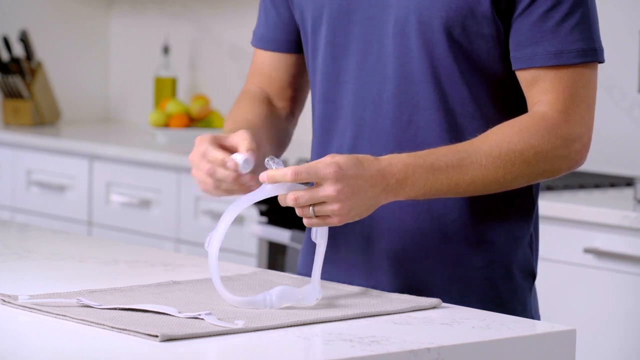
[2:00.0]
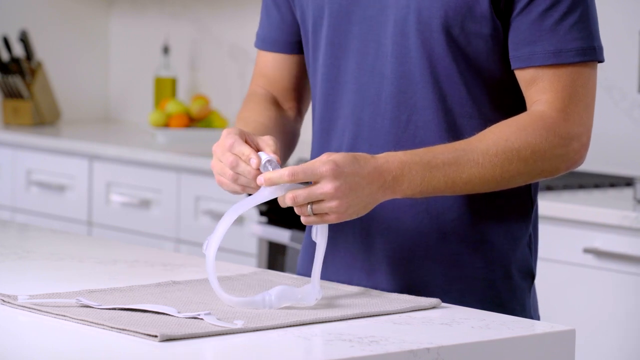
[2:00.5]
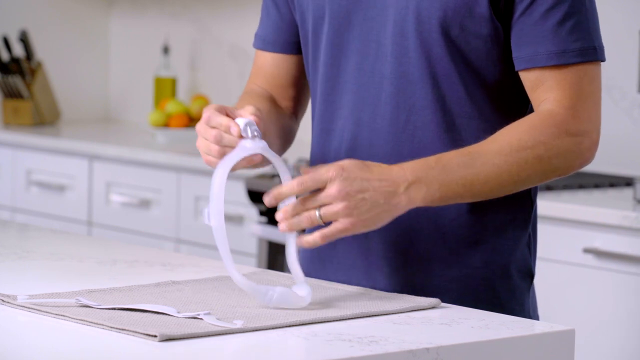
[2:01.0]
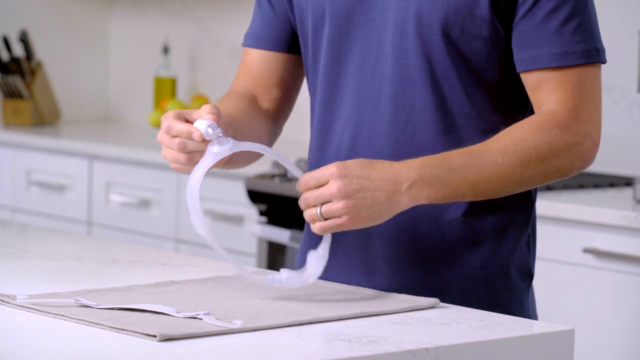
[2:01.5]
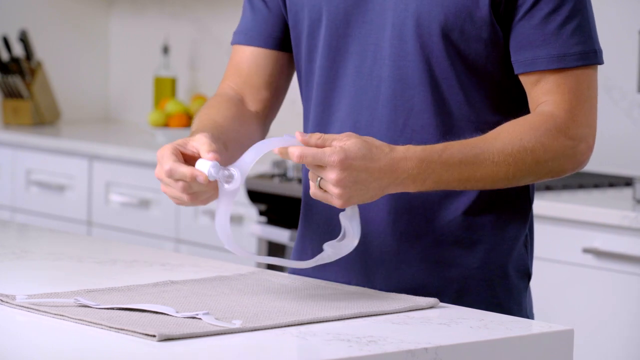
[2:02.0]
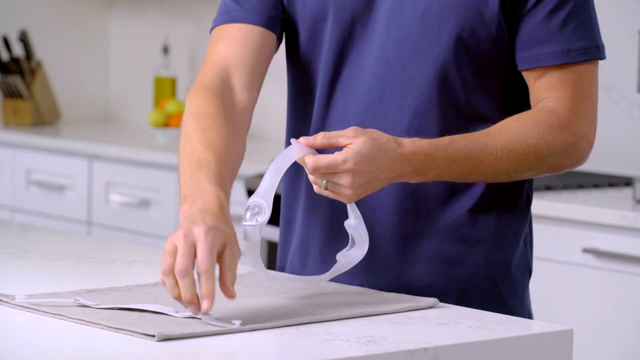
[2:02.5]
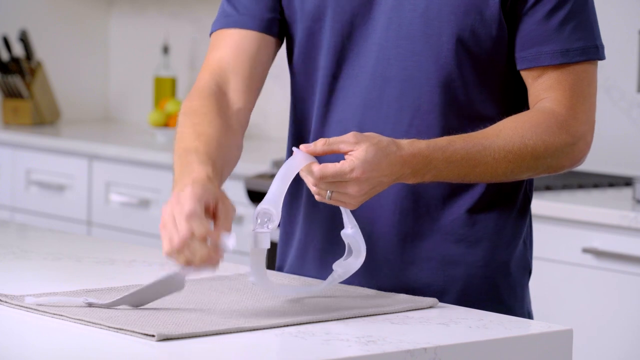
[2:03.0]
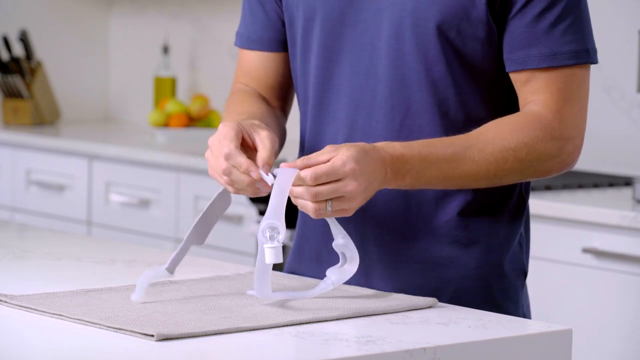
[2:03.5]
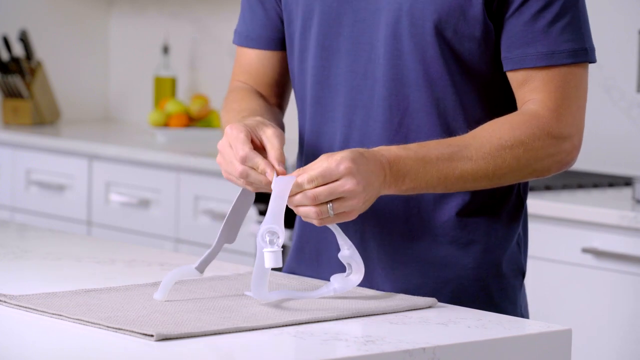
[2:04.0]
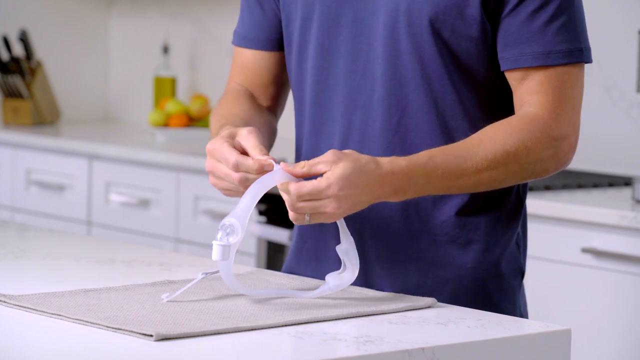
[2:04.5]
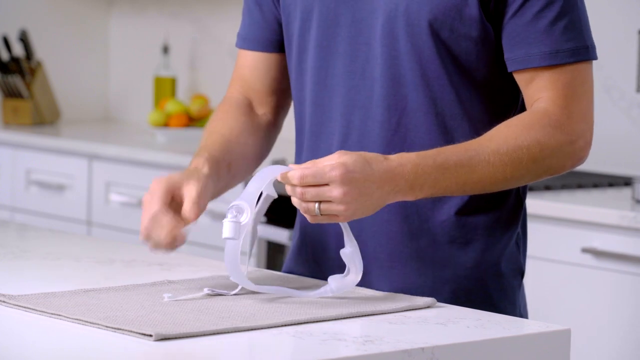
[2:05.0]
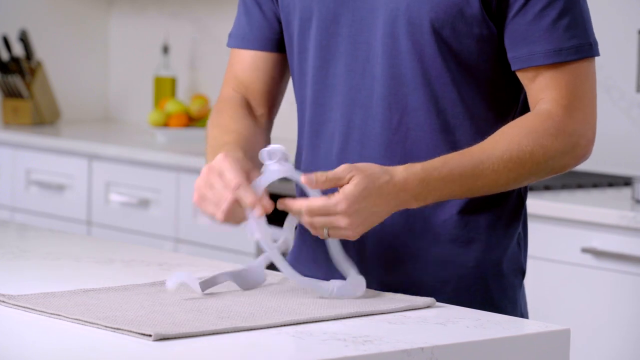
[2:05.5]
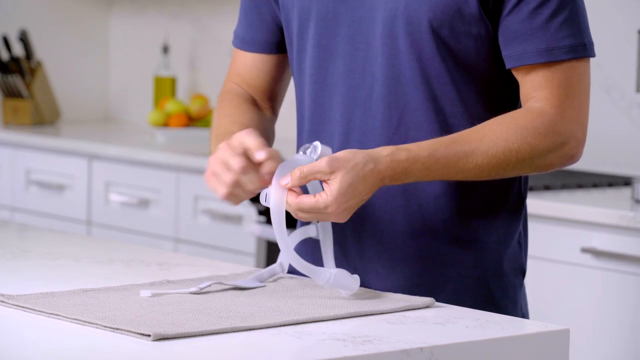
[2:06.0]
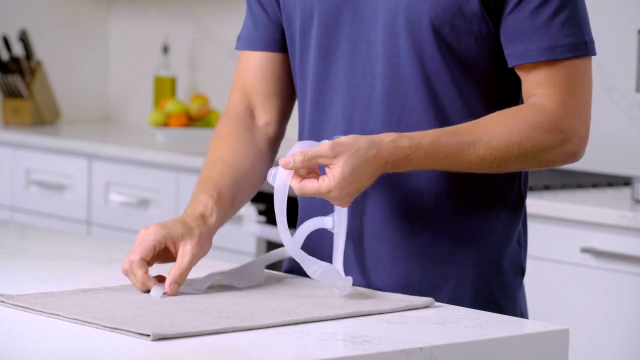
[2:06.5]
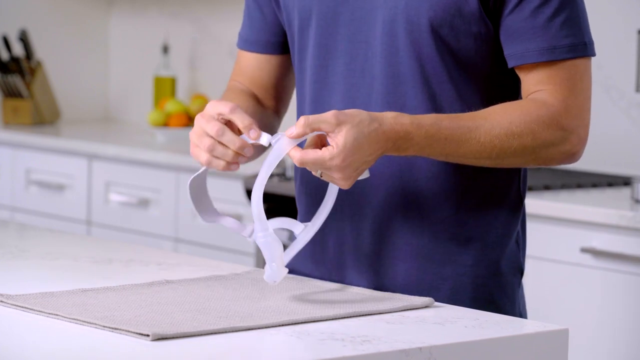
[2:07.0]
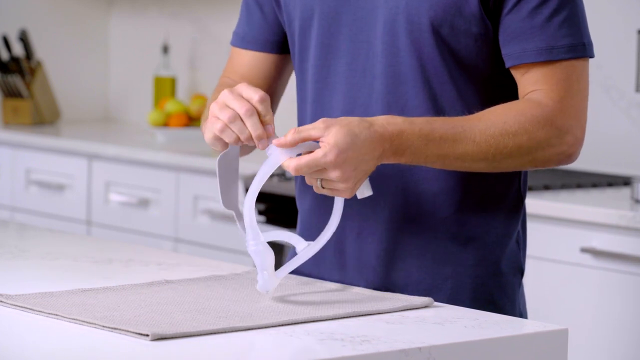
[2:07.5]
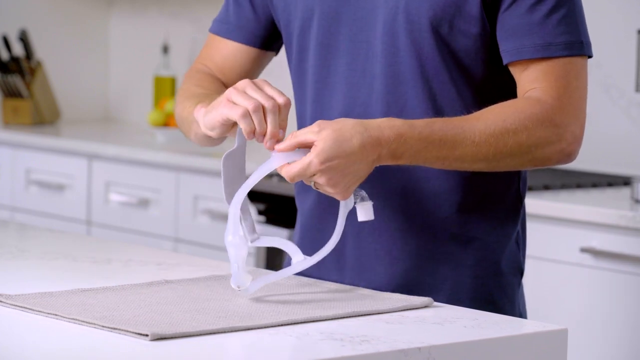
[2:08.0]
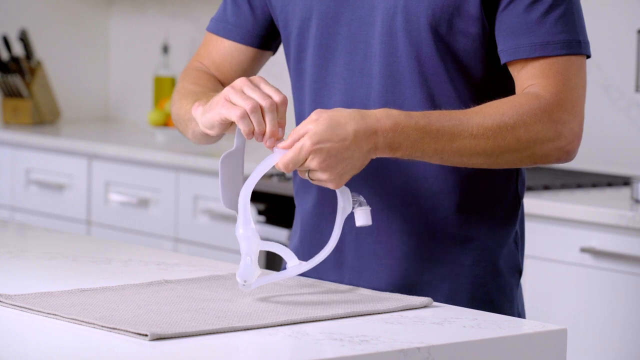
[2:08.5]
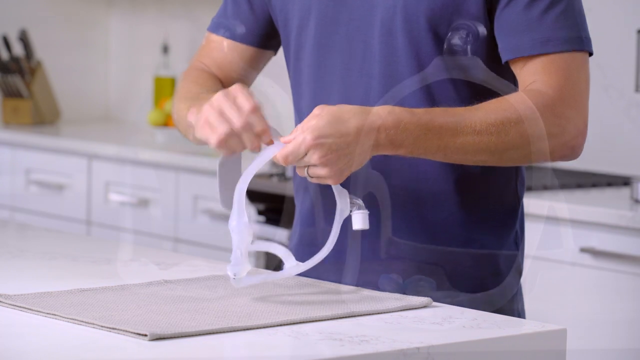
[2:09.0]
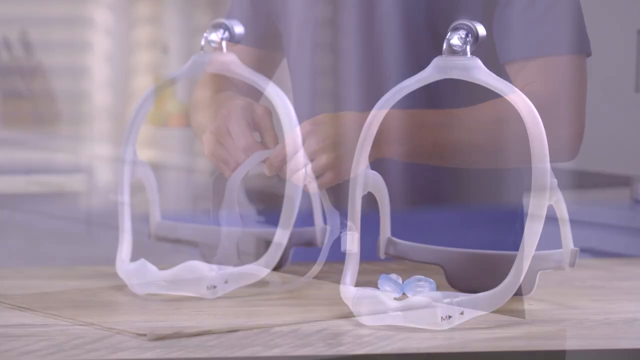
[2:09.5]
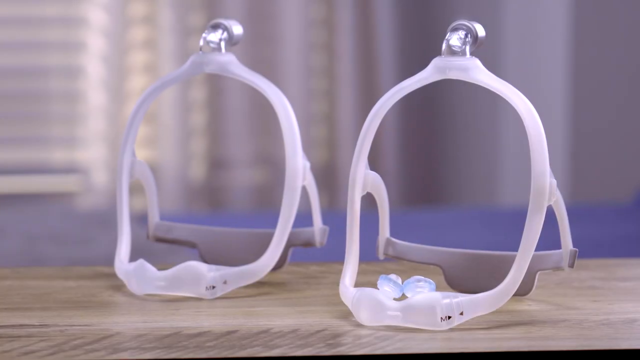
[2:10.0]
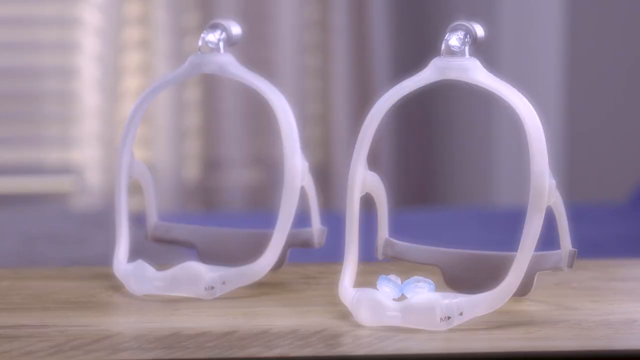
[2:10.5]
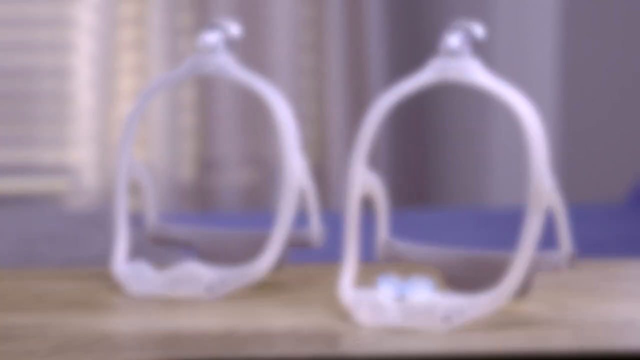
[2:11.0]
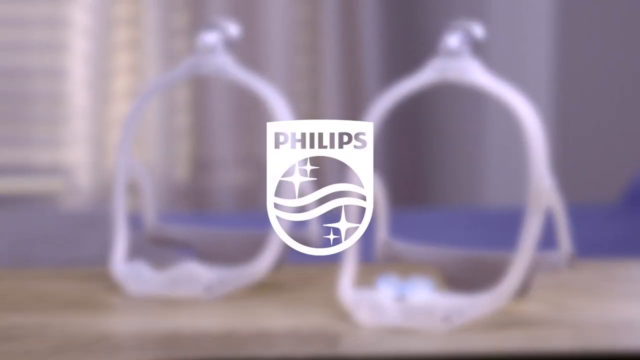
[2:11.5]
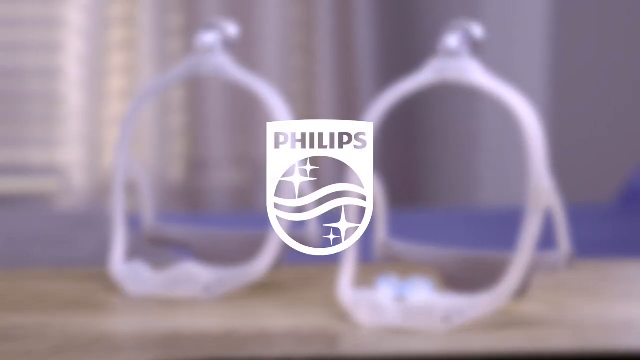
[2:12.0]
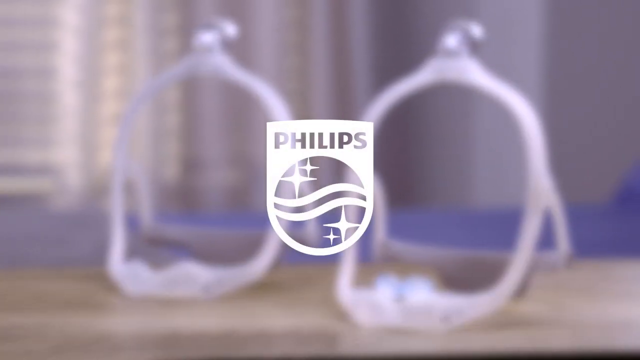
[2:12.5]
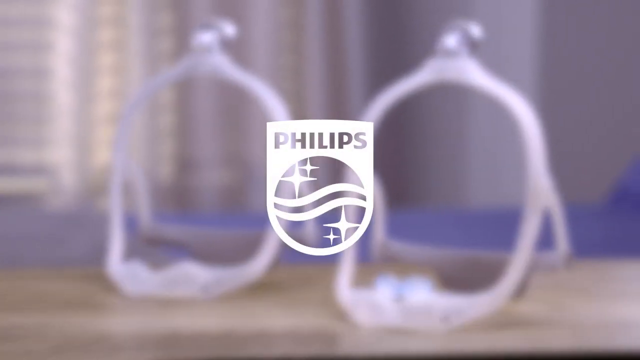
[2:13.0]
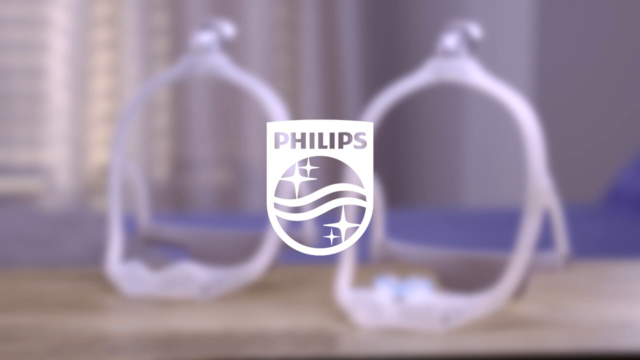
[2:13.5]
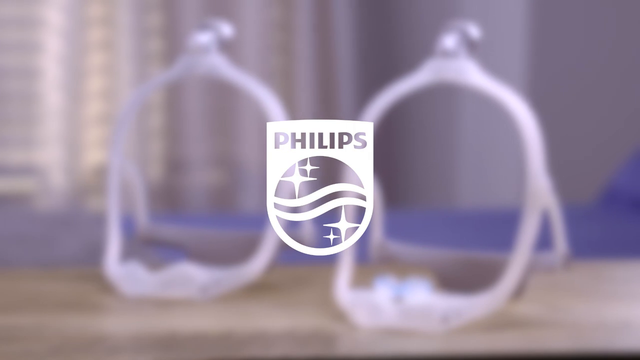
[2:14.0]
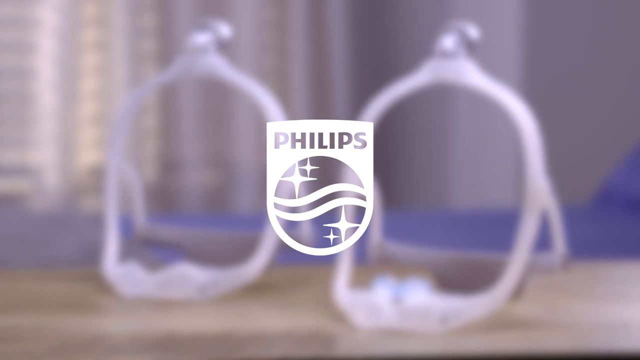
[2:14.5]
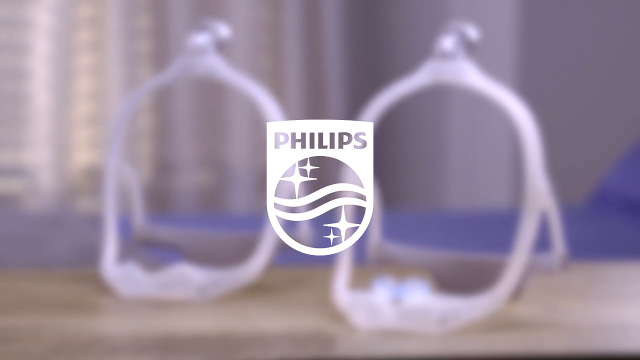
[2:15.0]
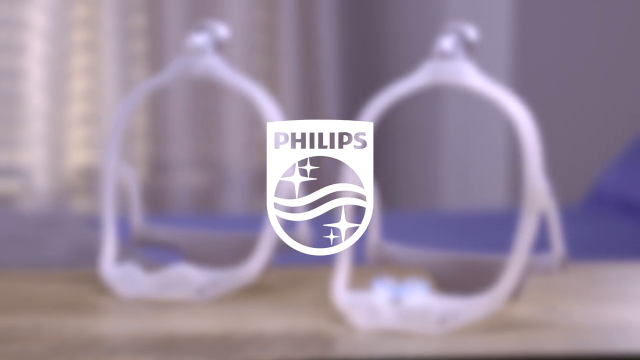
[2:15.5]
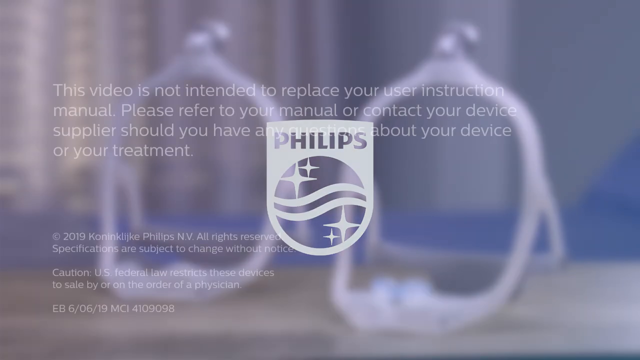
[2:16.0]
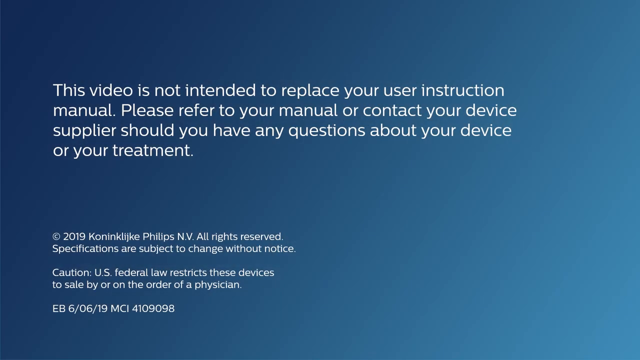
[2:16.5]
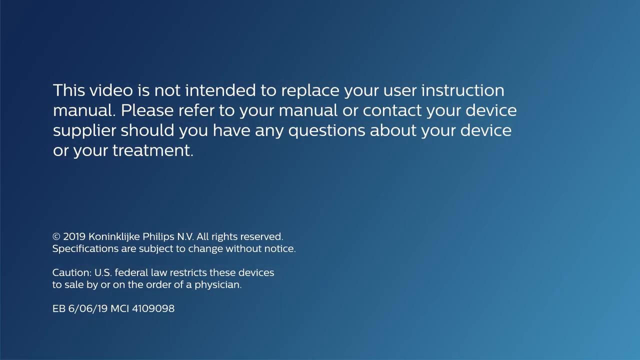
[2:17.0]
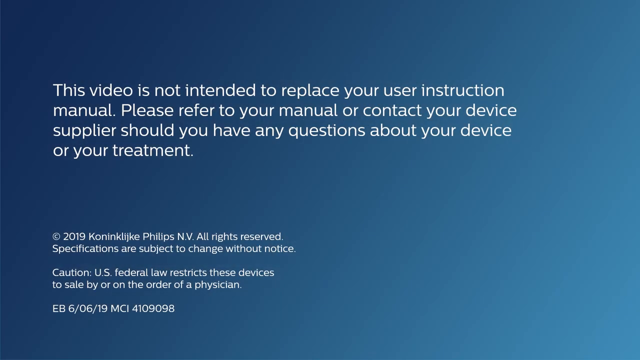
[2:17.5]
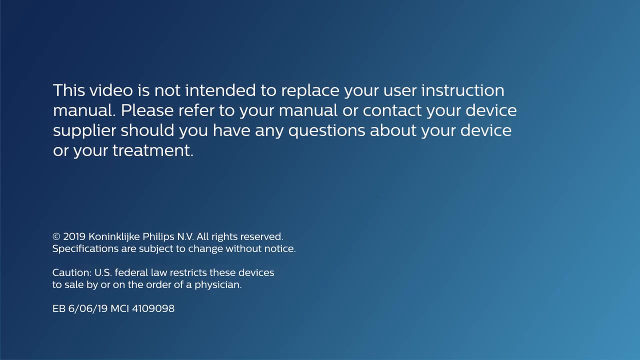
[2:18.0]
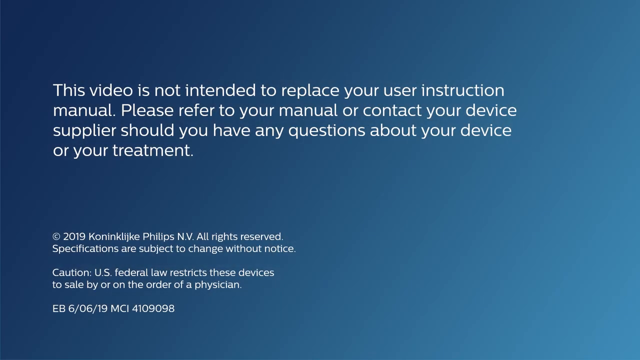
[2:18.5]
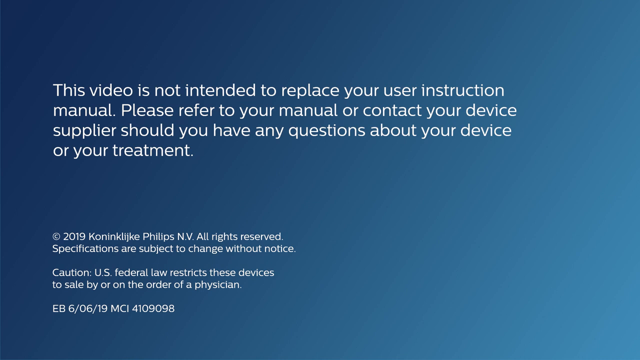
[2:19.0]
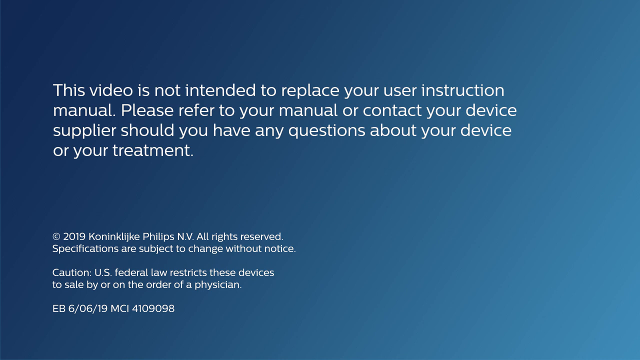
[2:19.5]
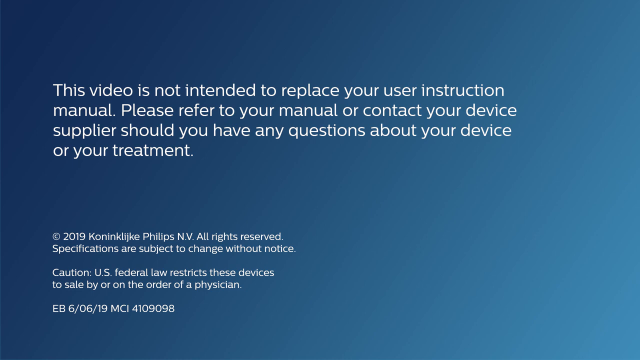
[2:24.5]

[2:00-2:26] The man continues putting the mask together, adjusting and inserting different parts. Then what looks to be two of the masks are shown assembled side by side, kind of standing up right next to each other, almost on their side but kind of raised up. The bottom part kind of looks like a sideways triangle, with two parts holding it up, and there is one solid part at the top with some of the clear plastic parts he installed. The background then becomes very blurry and shows a Philips logo. Finally, the same sort of blue gradient background appears with text saying "This video is not intended to replace your usual instruction manual", and advising to refer to the manual or contact the device manufacturer or supplier with any questions about taking apart the device or the device in general.